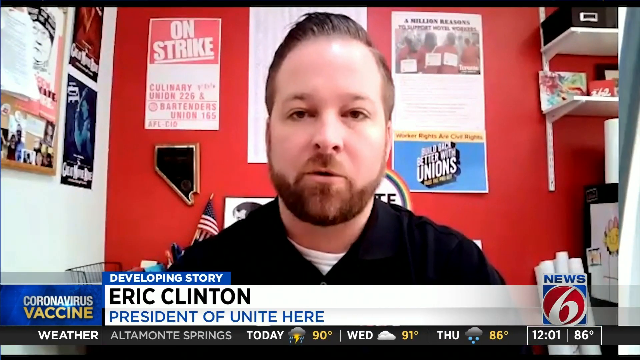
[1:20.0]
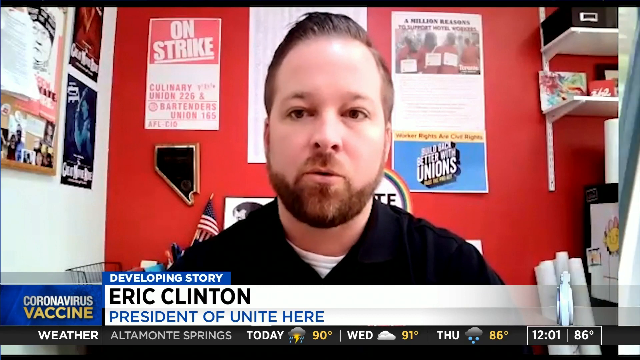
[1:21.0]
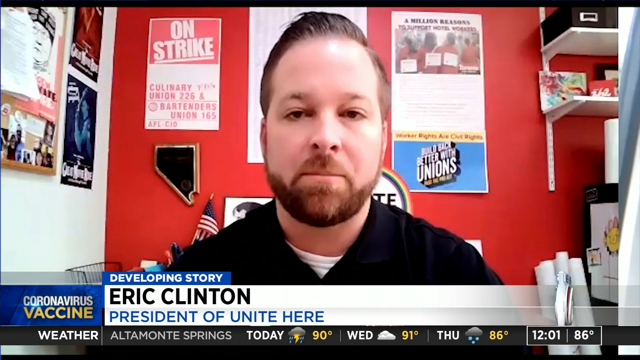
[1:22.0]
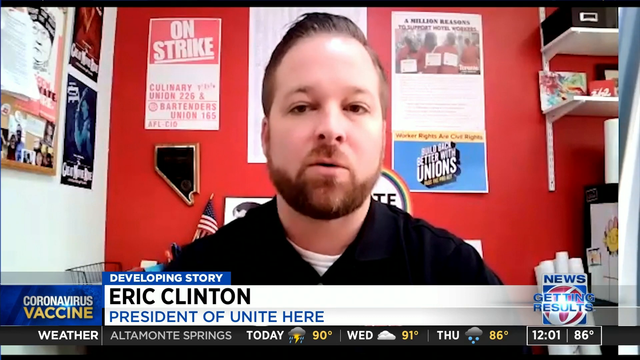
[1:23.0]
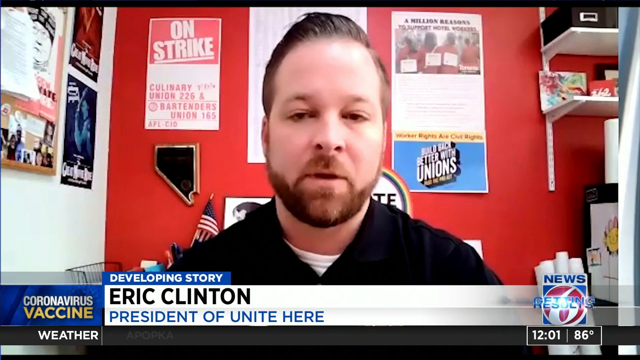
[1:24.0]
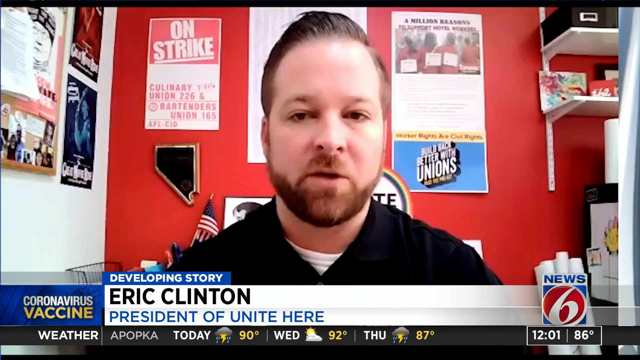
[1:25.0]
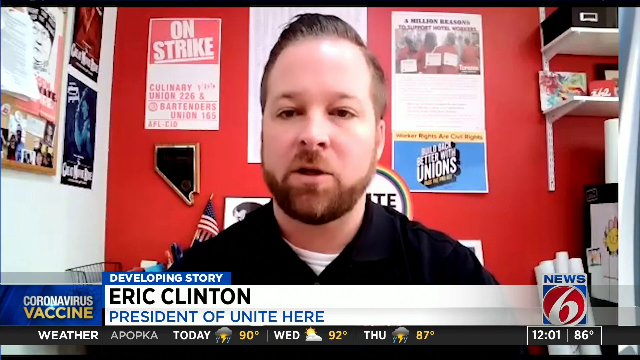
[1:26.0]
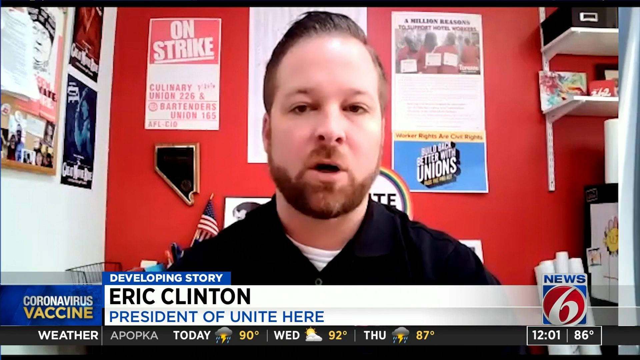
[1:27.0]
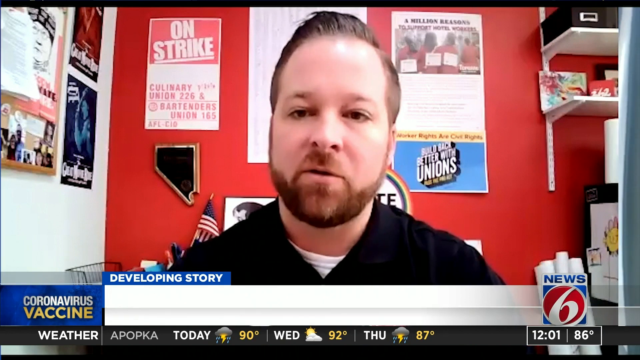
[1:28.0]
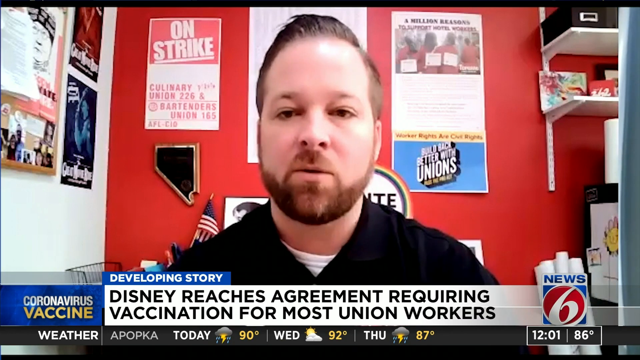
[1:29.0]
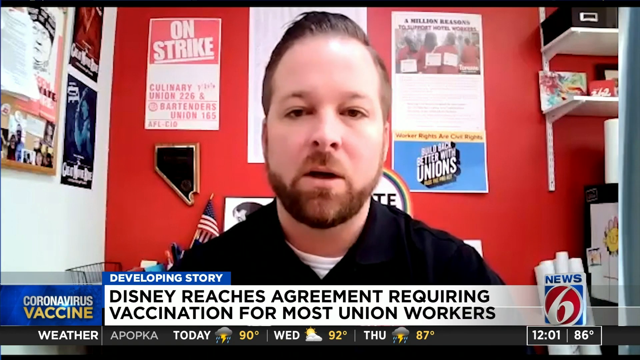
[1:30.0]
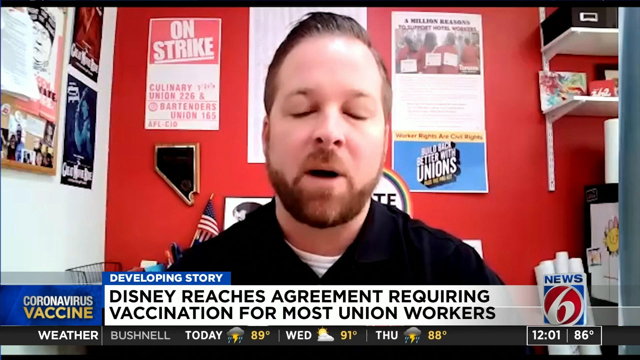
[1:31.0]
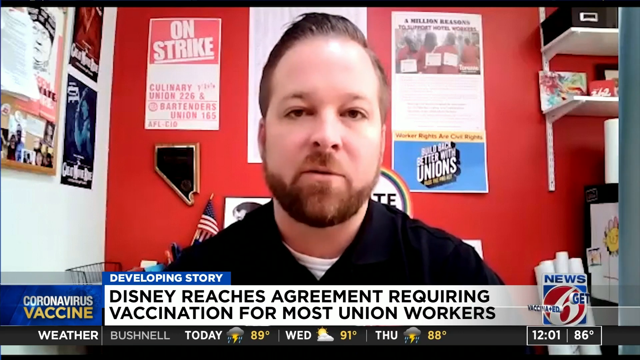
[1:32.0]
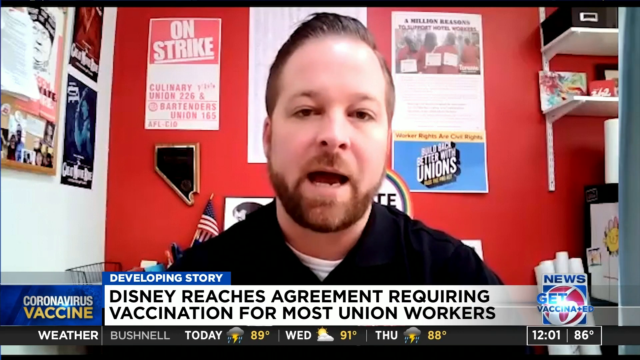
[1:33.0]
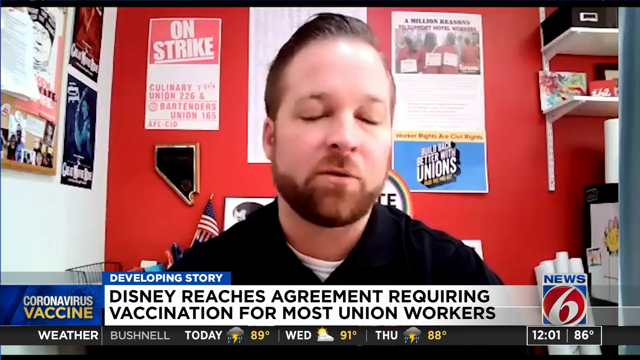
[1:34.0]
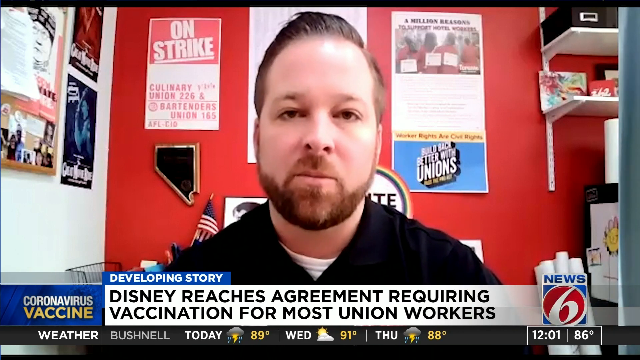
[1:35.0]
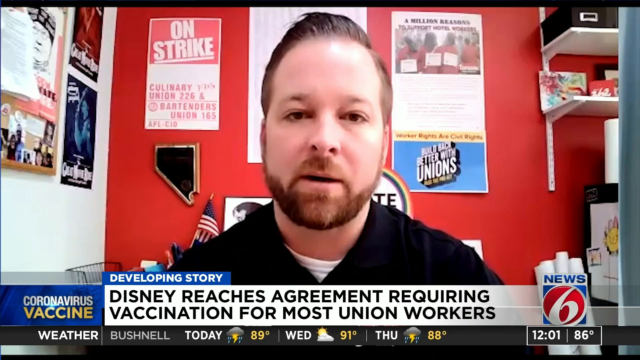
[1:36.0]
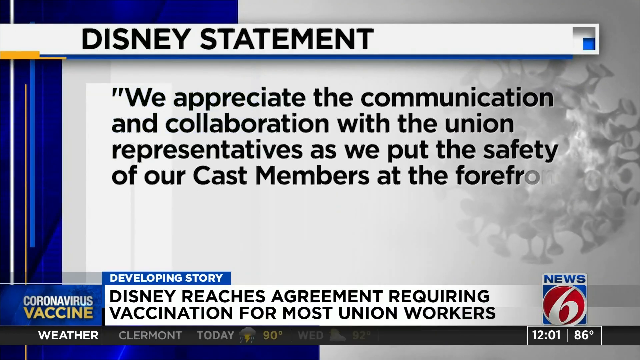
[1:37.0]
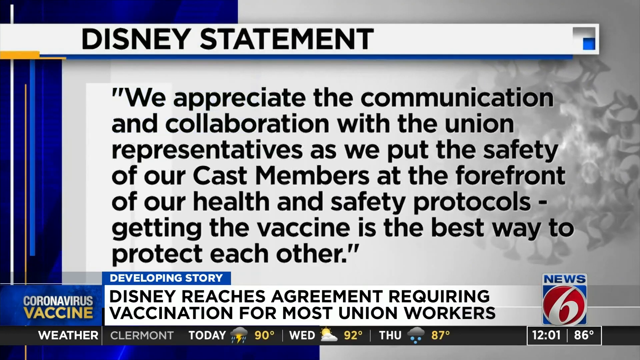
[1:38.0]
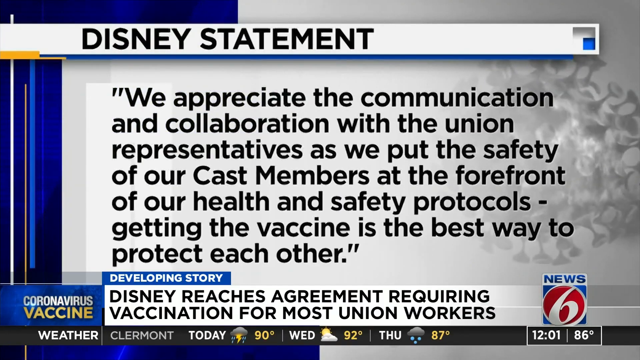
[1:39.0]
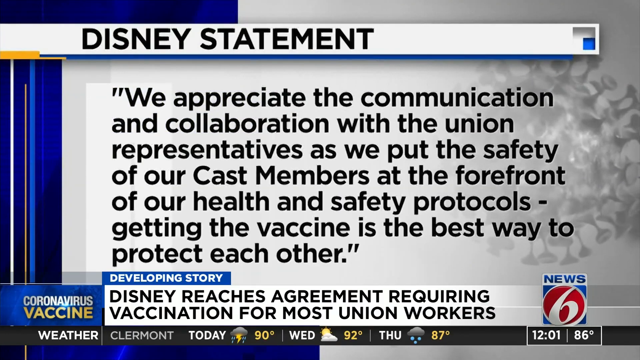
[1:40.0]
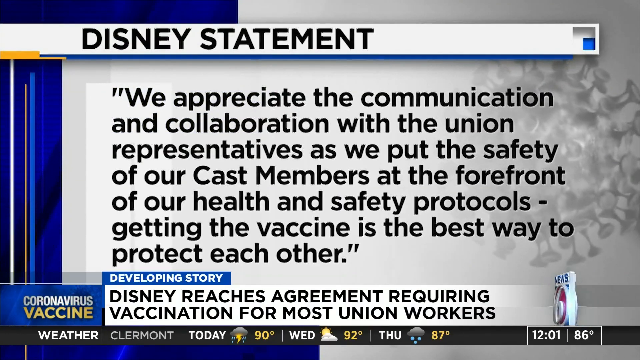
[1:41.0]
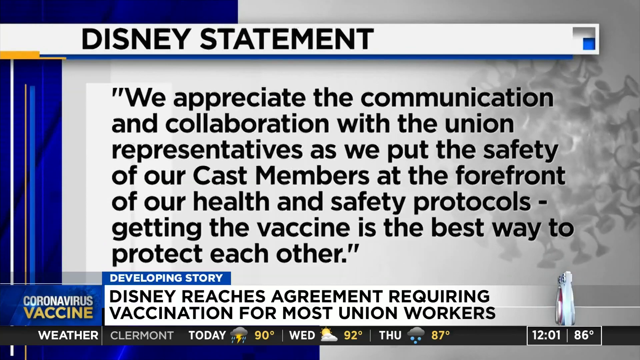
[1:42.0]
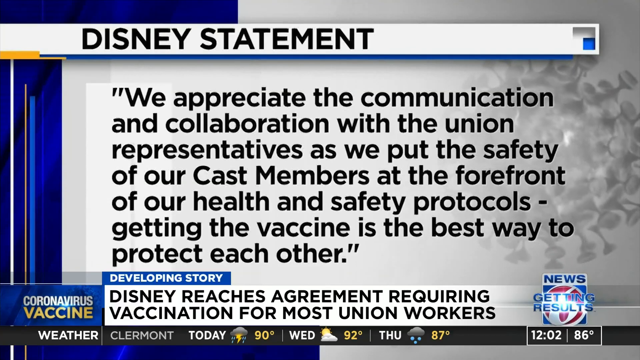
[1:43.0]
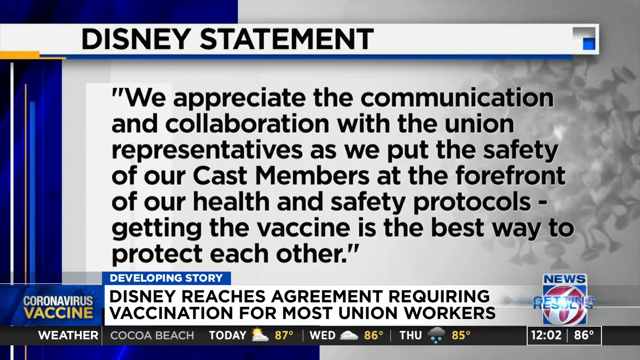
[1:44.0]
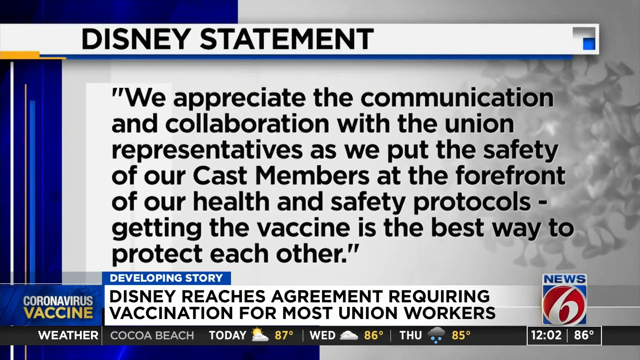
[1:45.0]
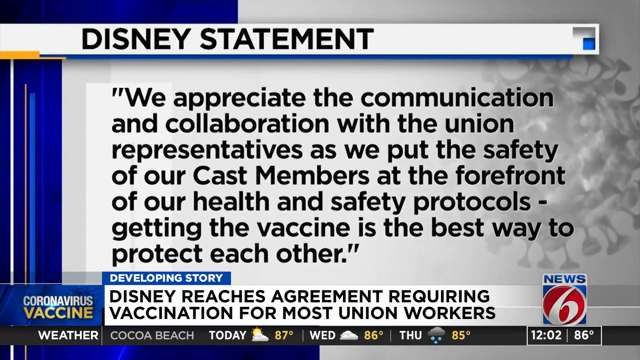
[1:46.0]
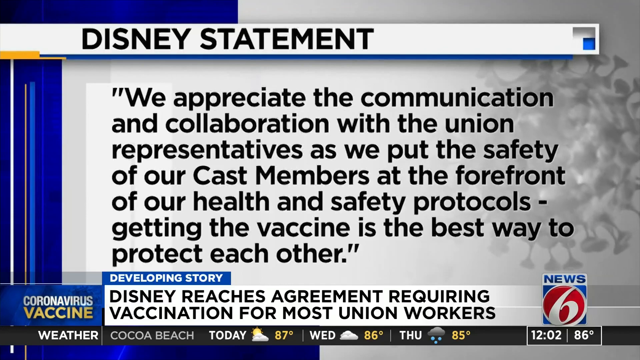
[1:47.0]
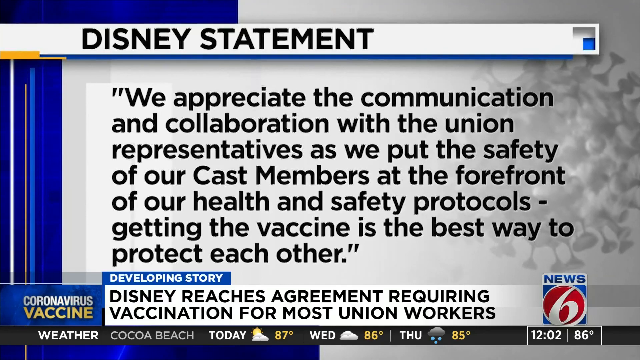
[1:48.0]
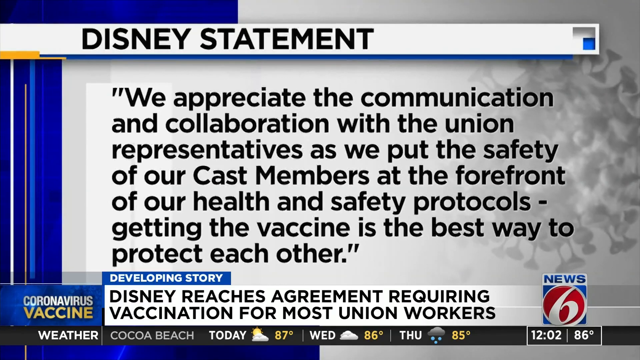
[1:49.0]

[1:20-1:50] Eric Clinton, president of Unite Here, talks to the camera about the agreement. A Disney statement appears on screen: "we appreciate the communication and collaboration with the union representatives as we put the safety of our cast members at the forefront of our health and safety protocols. Getting vaccine is the best way to protect each other."